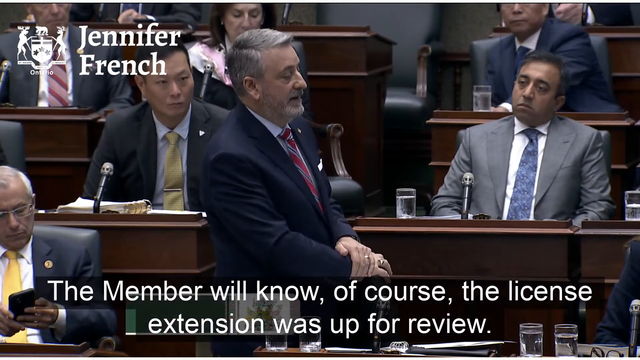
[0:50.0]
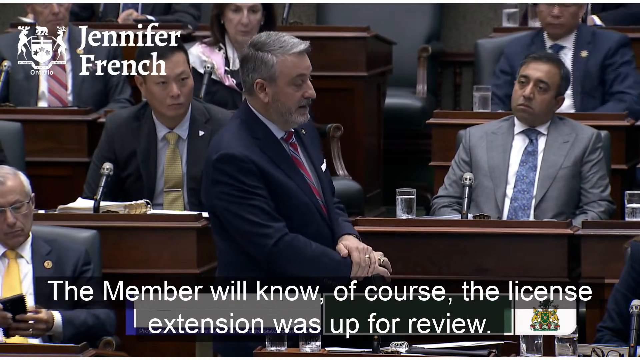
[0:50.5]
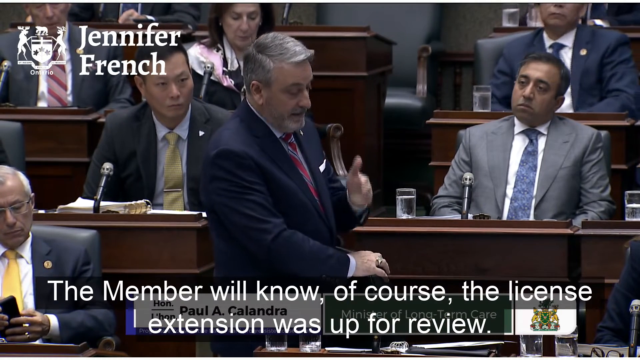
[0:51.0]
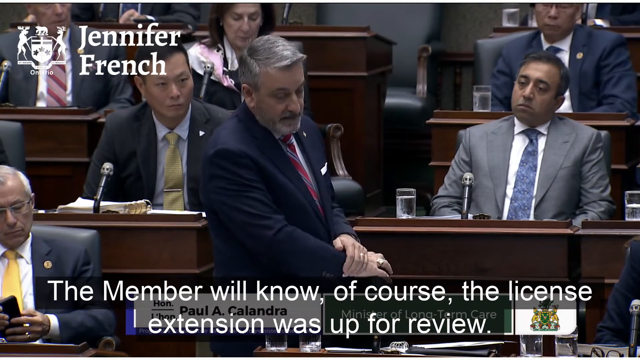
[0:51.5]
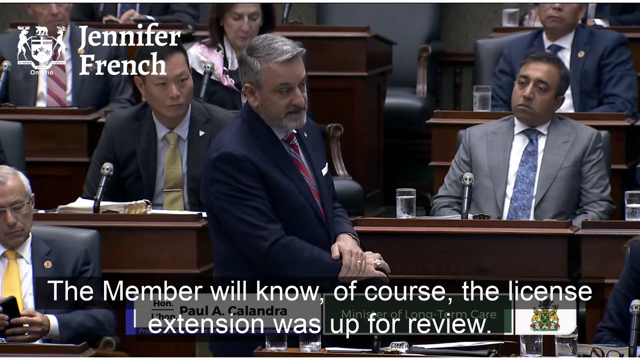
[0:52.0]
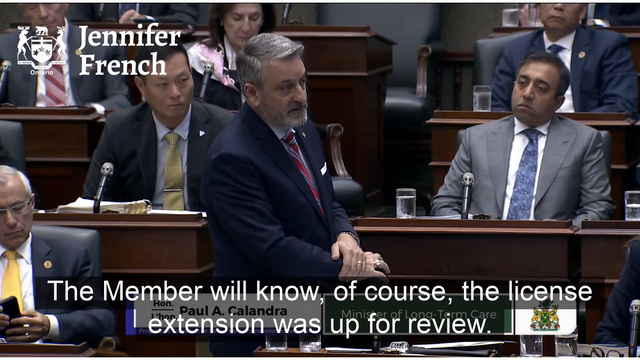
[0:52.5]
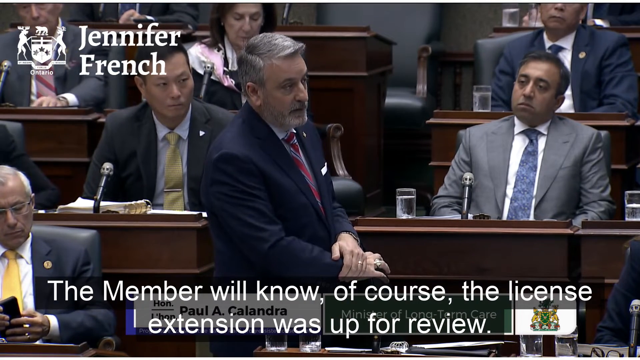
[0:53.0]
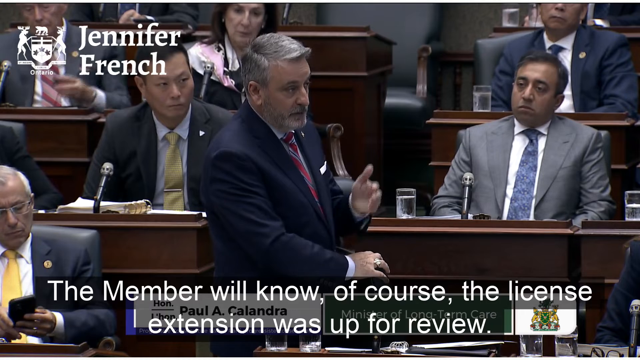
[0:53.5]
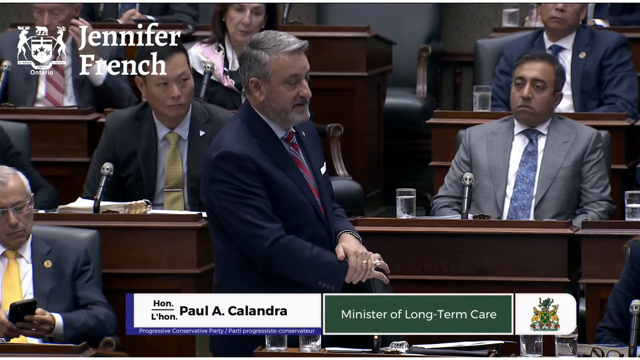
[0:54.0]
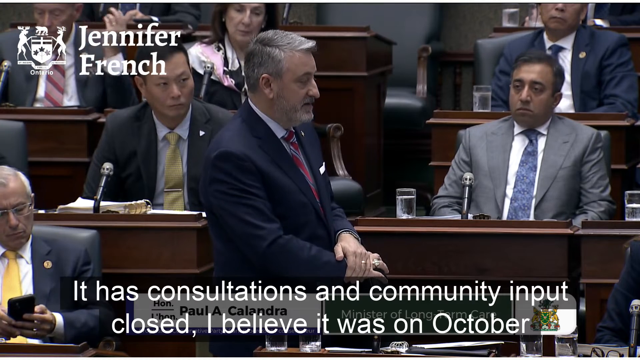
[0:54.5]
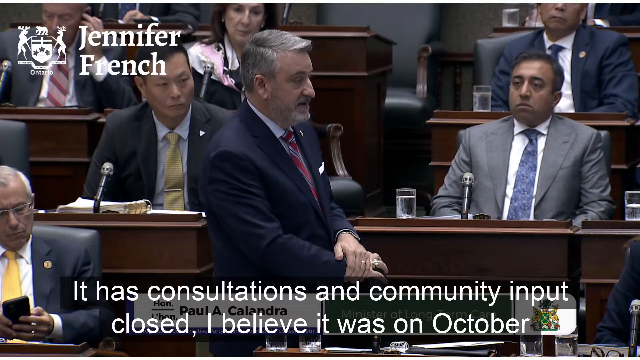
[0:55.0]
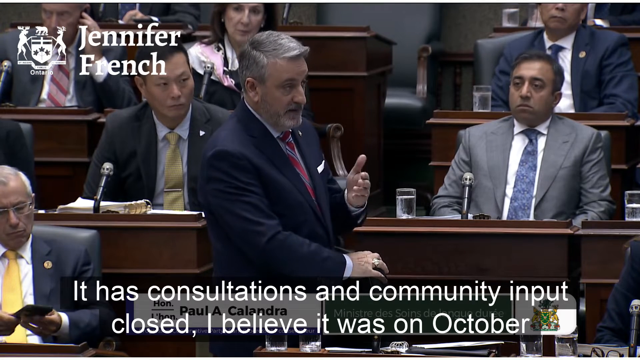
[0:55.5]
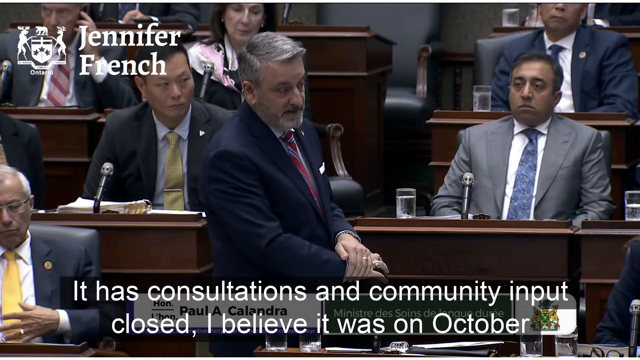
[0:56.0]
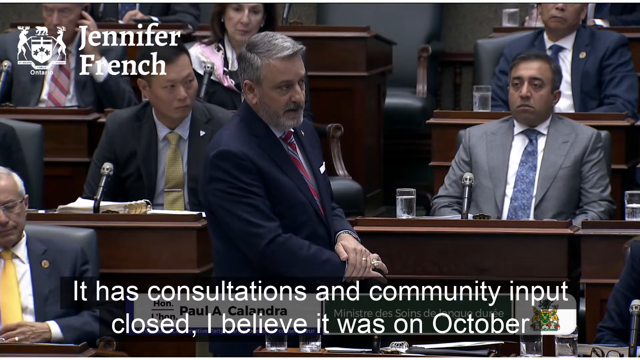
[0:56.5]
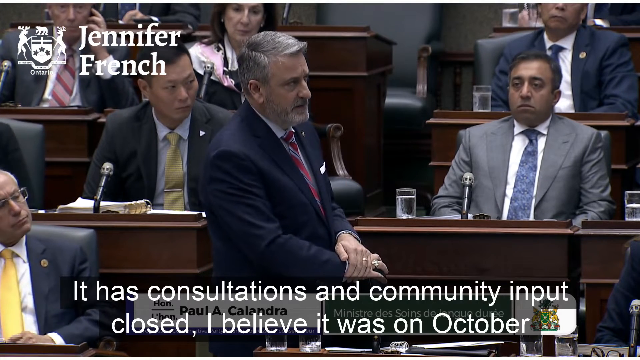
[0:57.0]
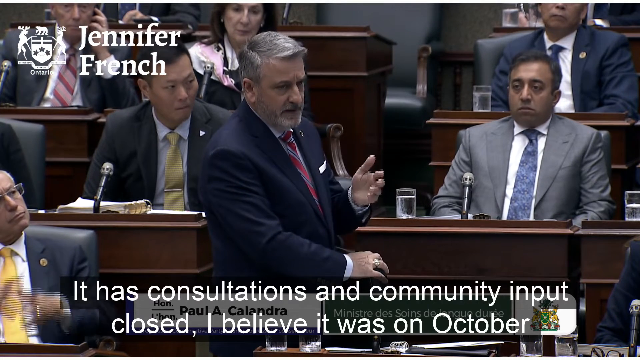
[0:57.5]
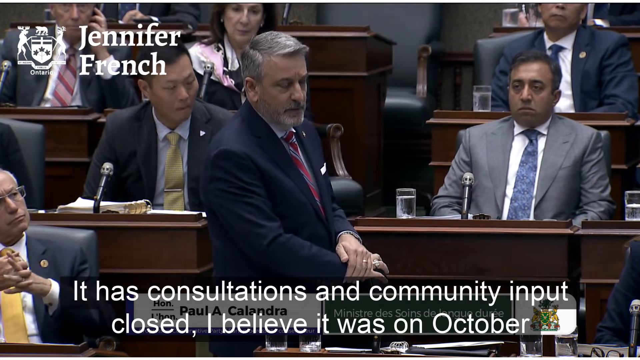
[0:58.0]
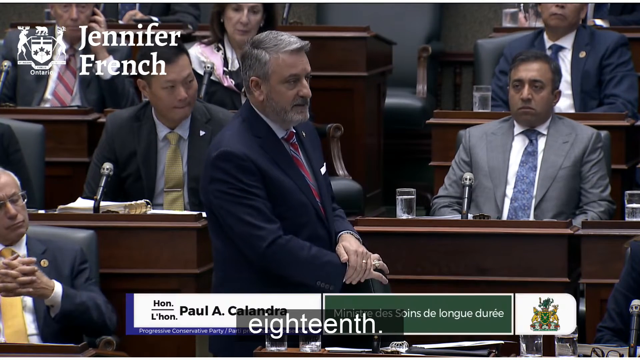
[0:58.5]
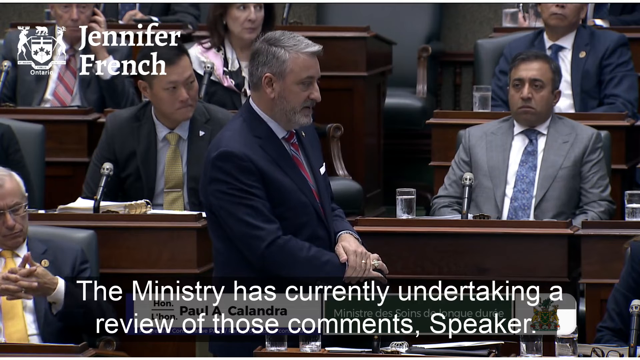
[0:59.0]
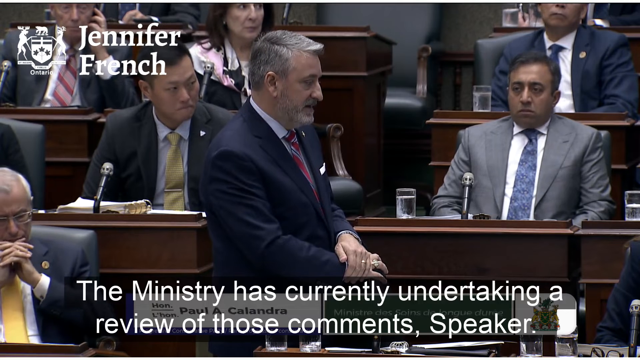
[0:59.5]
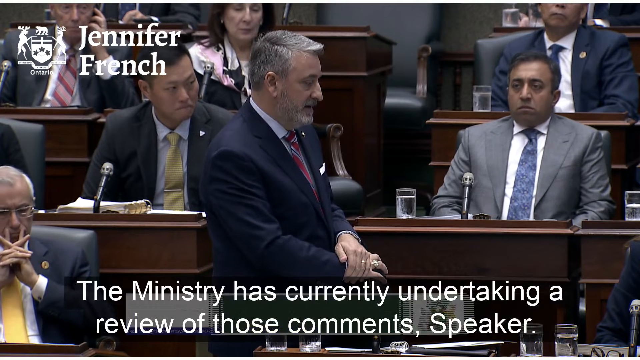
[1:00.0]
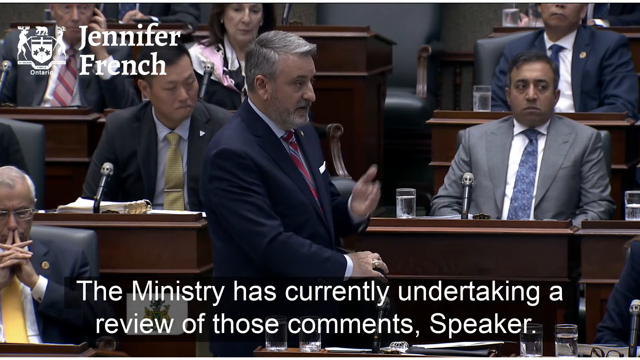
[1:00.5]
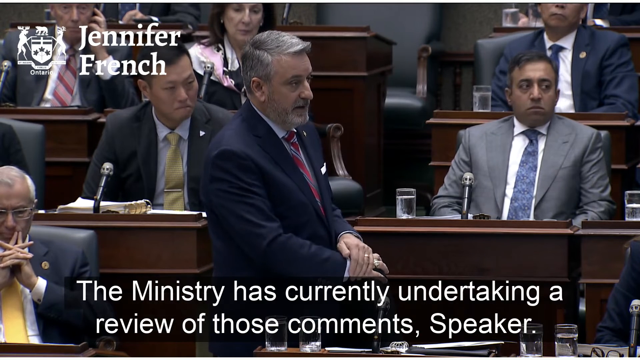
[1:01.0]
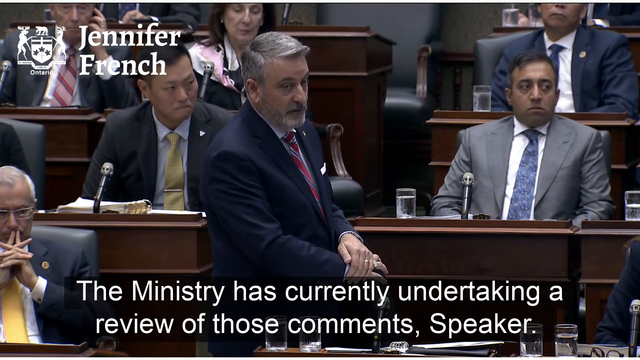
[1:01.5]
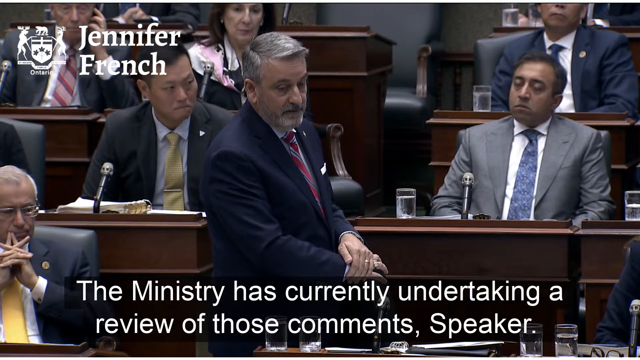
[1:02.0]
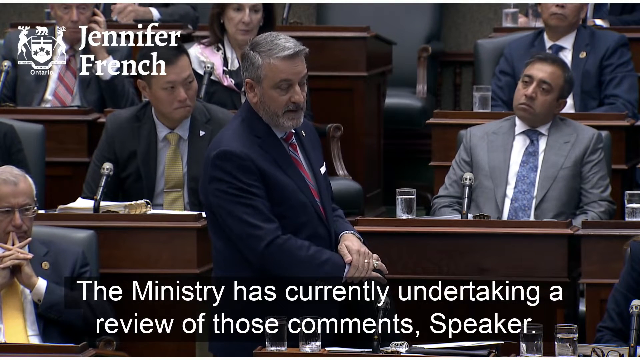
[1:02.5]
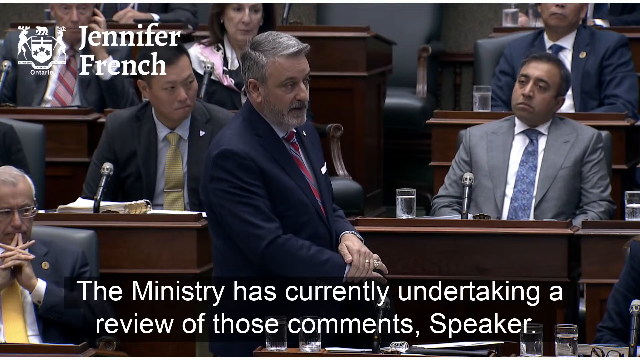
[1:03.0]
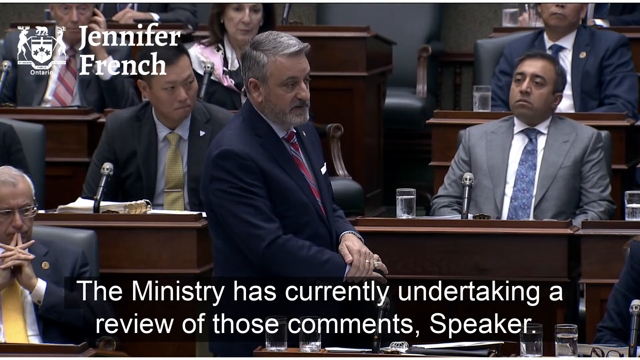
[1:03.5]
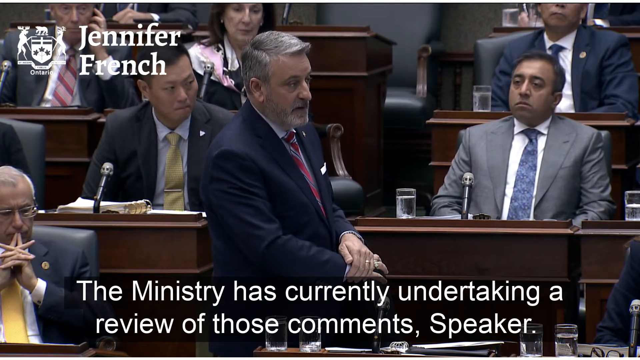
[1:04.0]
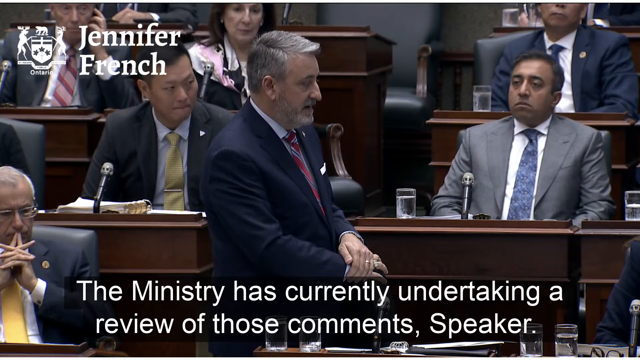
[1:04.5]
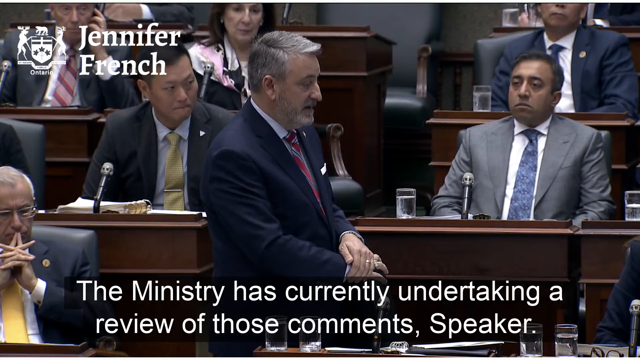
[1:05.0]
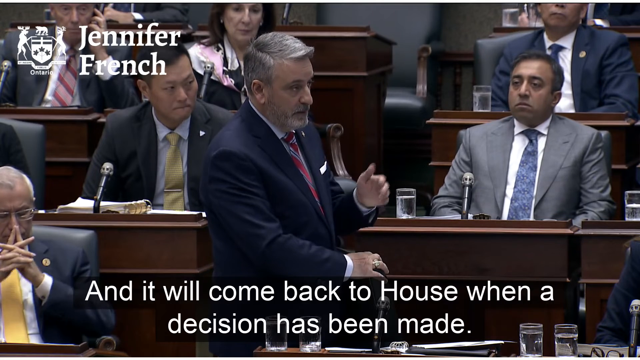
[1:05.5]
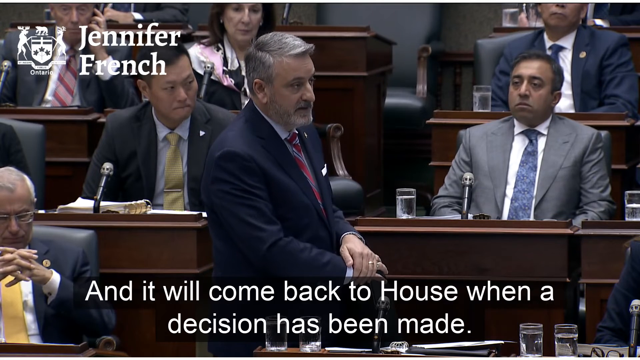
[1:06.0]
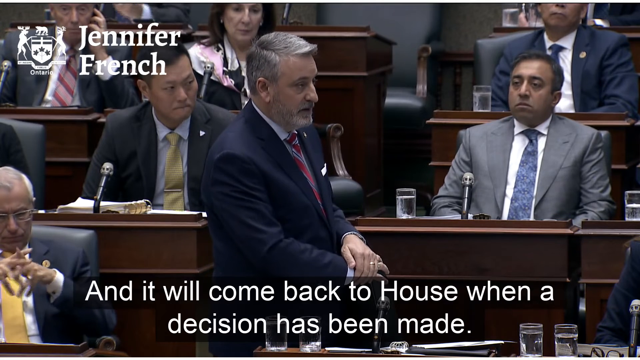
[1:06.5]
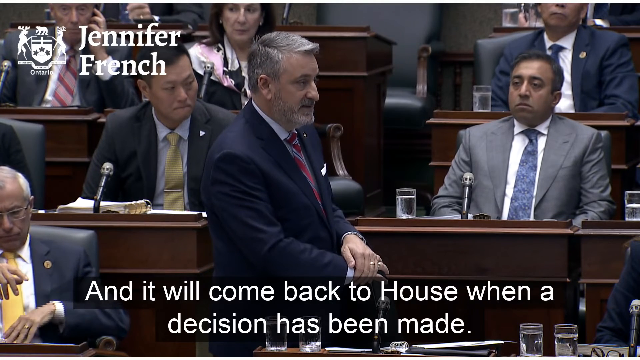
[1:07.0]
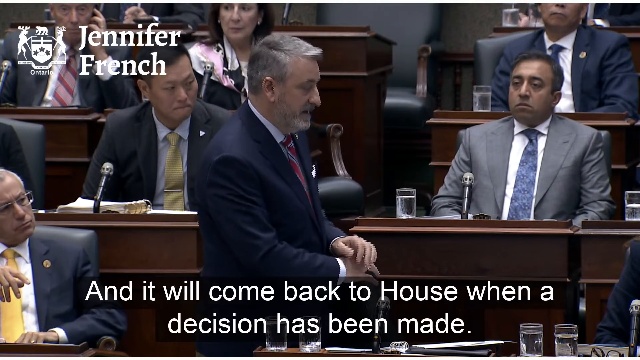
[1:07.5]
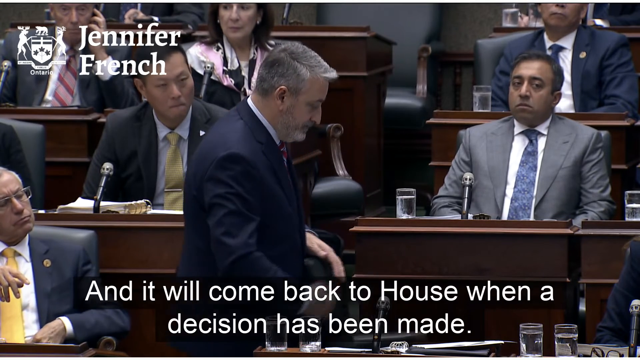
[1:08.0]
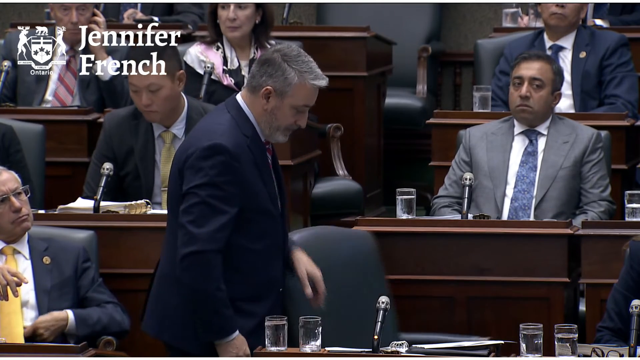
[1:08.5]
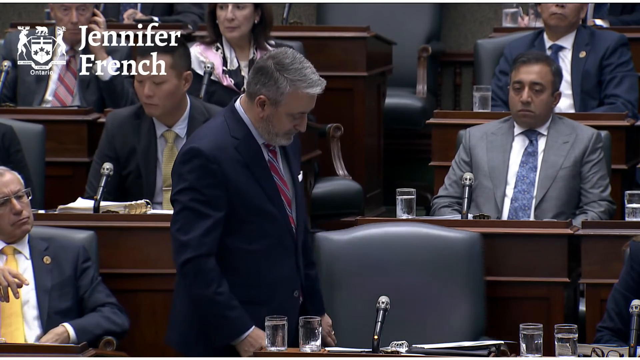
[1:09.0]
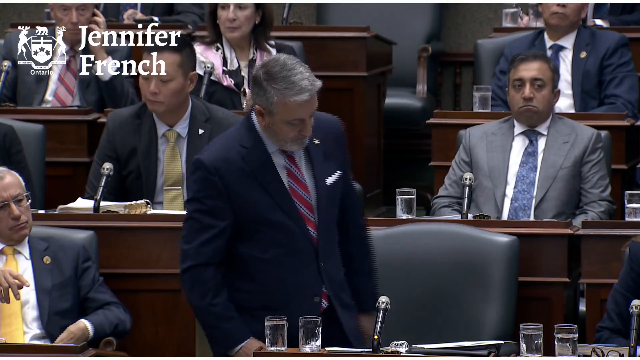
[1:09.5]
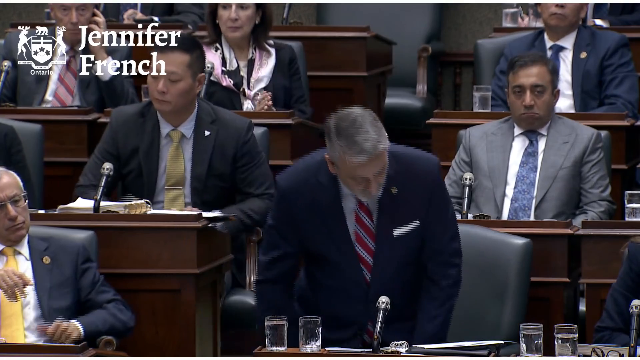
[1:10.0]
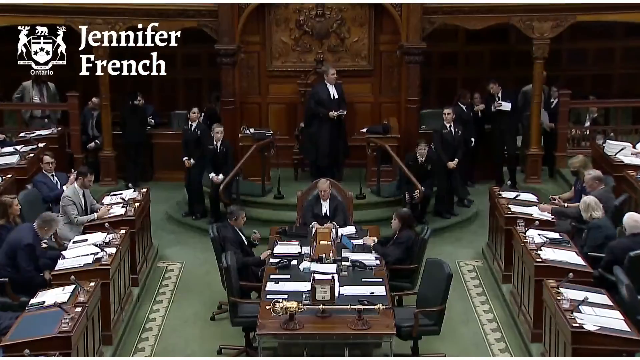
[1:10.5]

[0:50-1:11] The man with short gray hair and gray facial hair, wearing a navy business jacket, a light blue button-down shirt and a red striped tie, has his chair turned so that he is resting his hands on its back. Men in suits are still seated beside and behind him, and one woman is visible behind his head. "Jennifer French" appears in white text with an emblem in the upper left corner of the screen. Text below him on his desk shows his name, "Paul A. Calandra", and the text box continues with words about "consultations and community input closed", a review of those comments, and it coming to the house "when a decision has been made." He then spins his chair around and takes a seat.